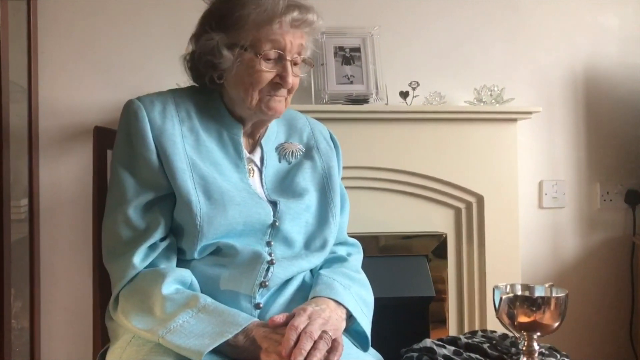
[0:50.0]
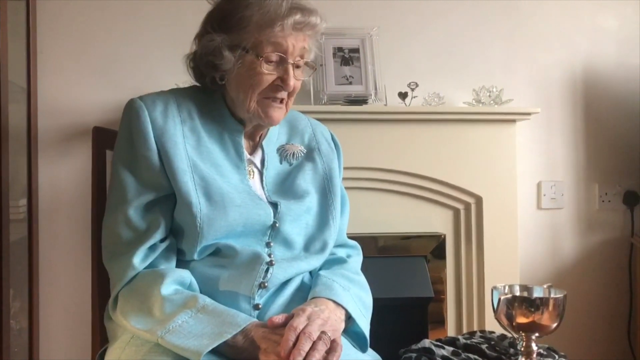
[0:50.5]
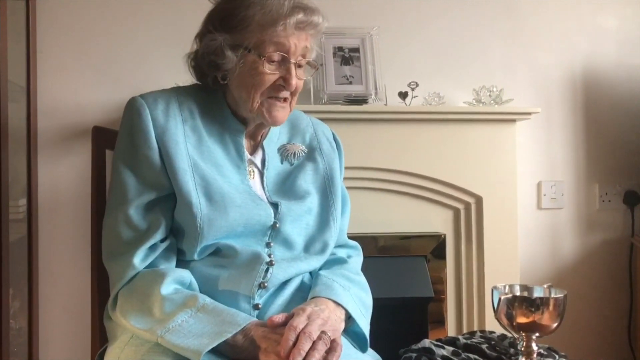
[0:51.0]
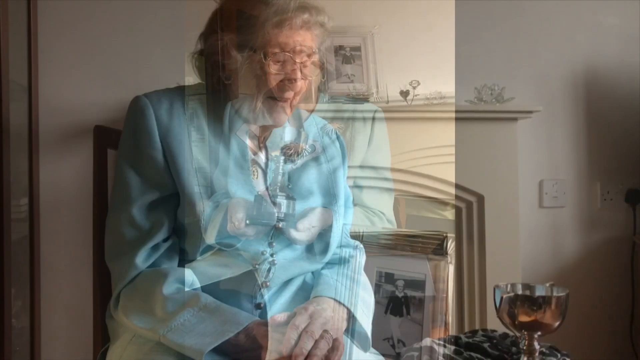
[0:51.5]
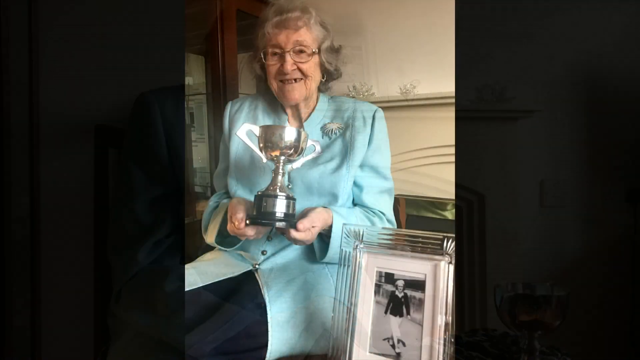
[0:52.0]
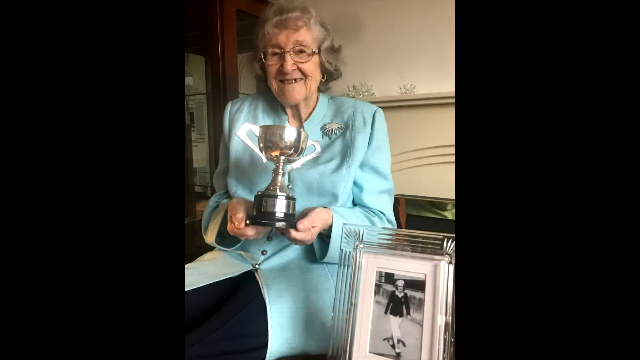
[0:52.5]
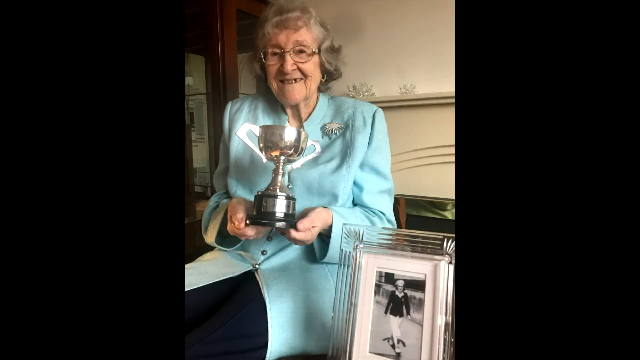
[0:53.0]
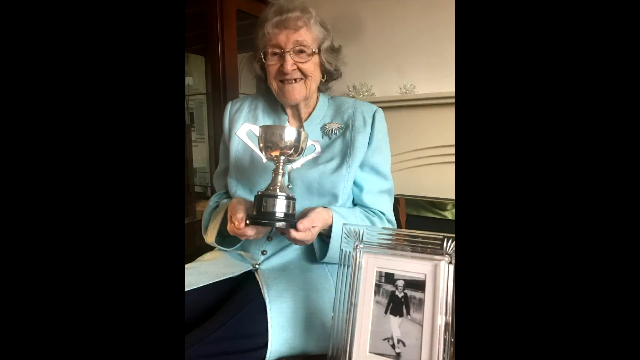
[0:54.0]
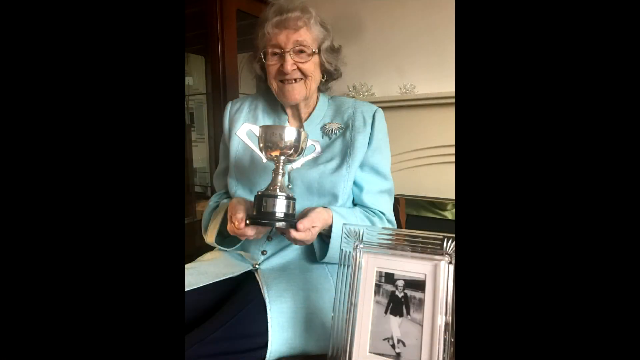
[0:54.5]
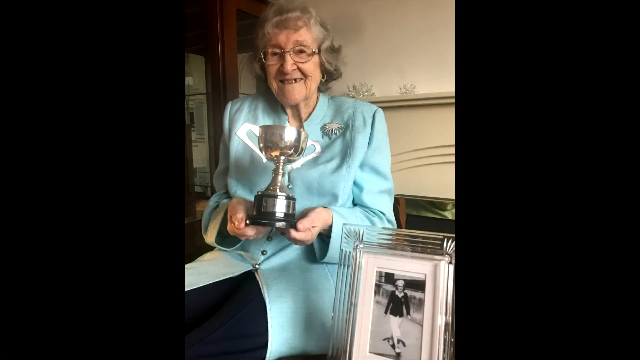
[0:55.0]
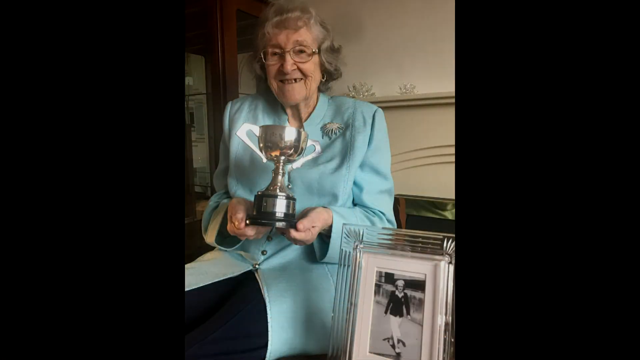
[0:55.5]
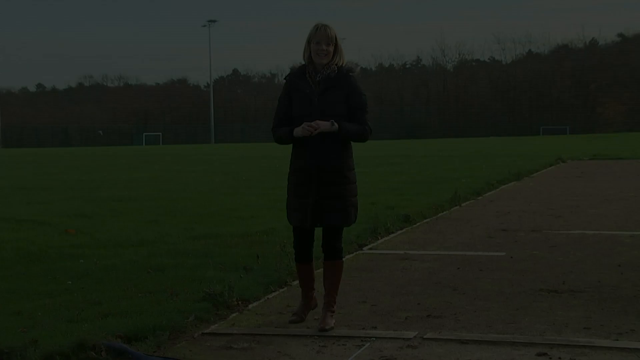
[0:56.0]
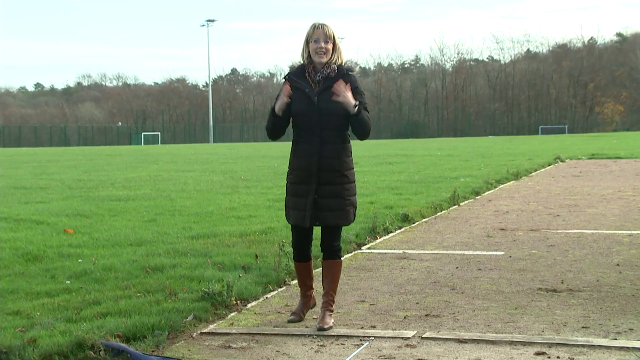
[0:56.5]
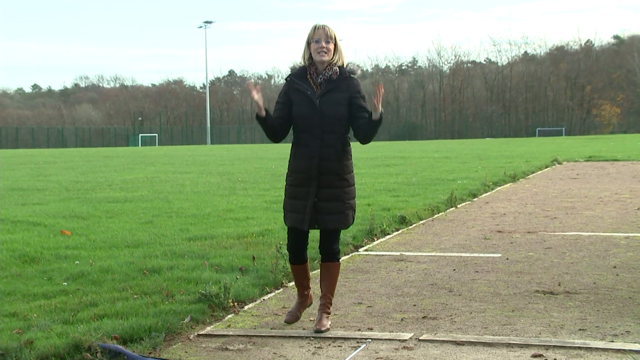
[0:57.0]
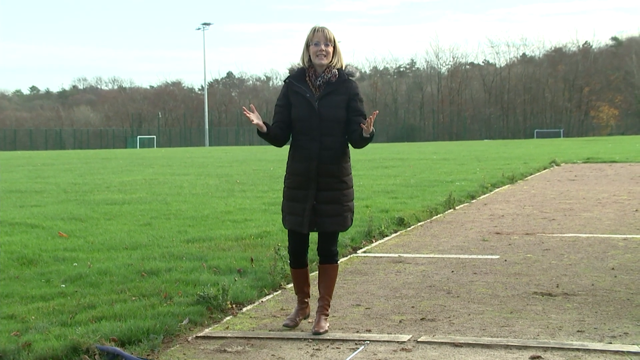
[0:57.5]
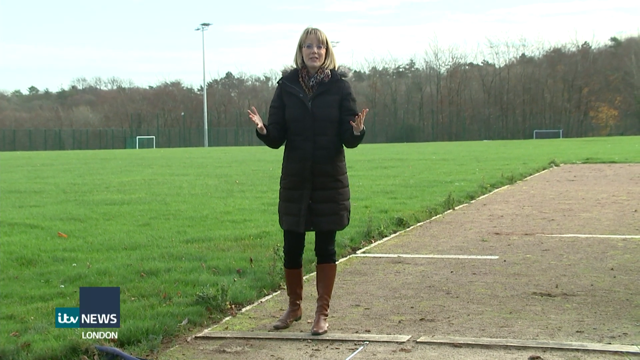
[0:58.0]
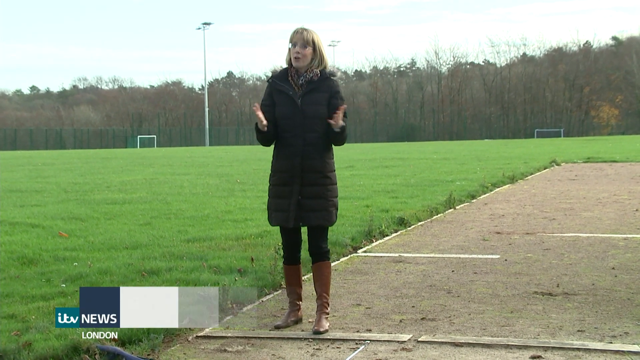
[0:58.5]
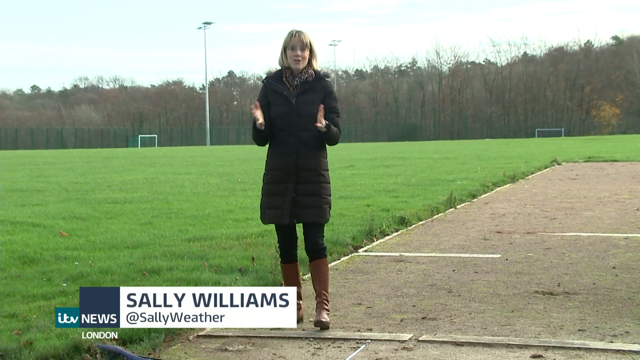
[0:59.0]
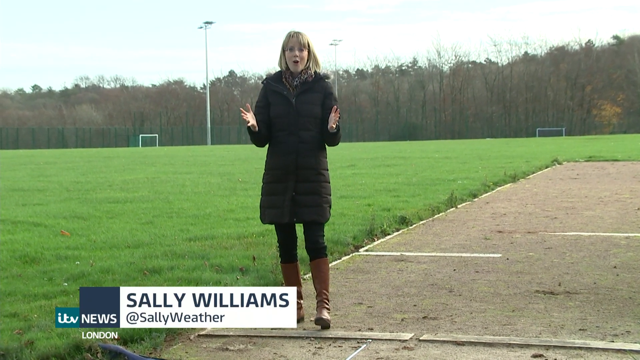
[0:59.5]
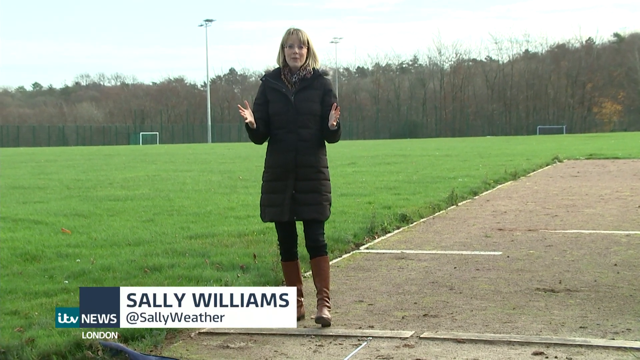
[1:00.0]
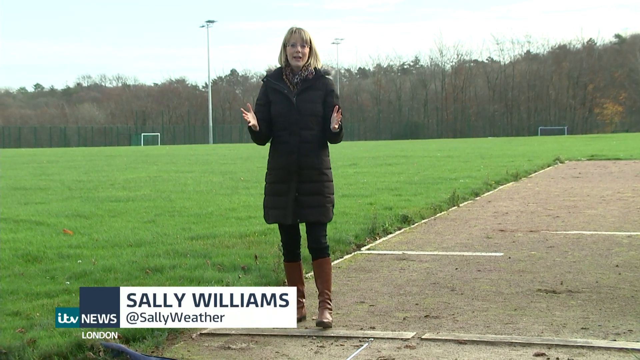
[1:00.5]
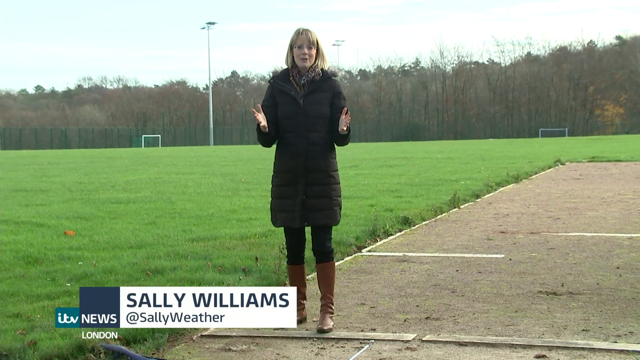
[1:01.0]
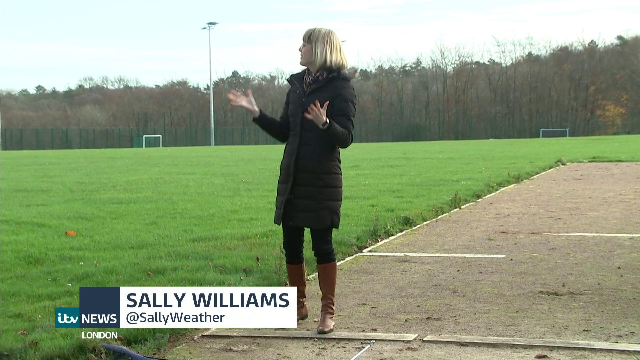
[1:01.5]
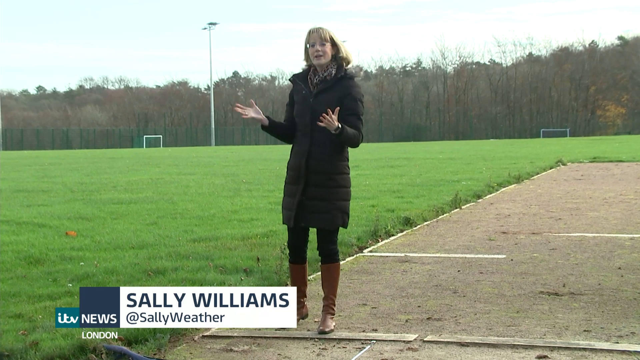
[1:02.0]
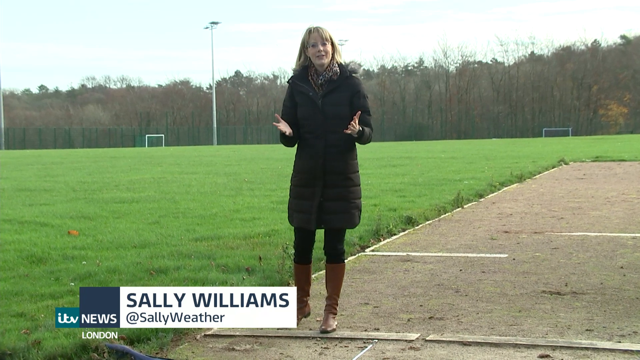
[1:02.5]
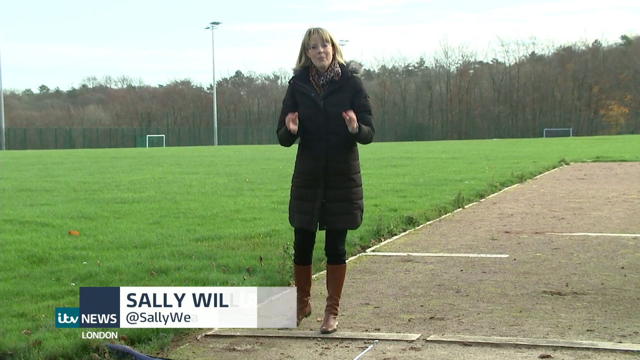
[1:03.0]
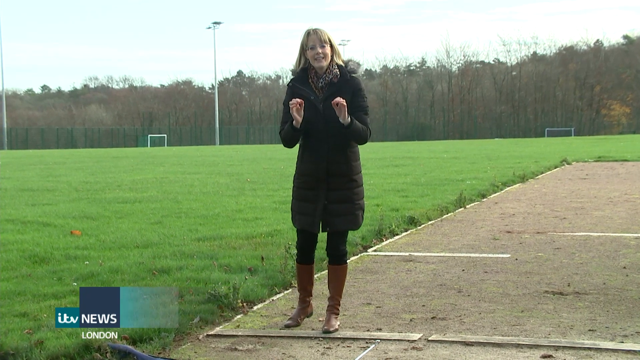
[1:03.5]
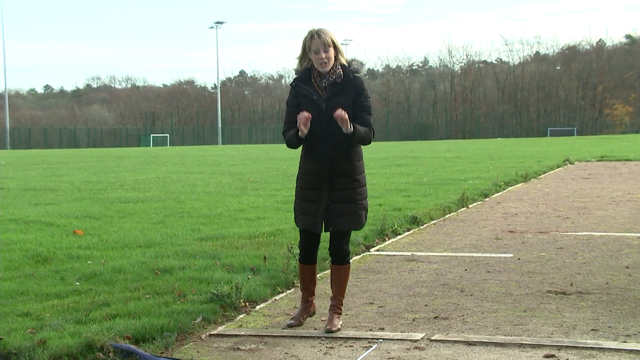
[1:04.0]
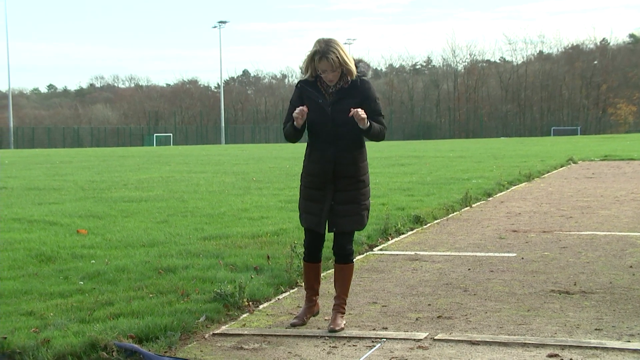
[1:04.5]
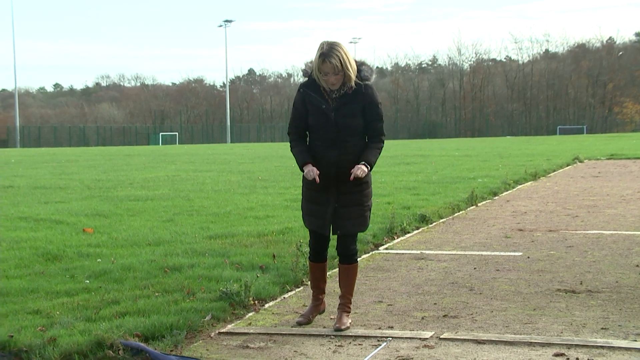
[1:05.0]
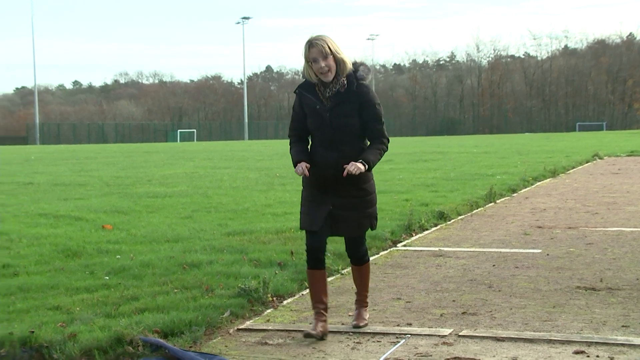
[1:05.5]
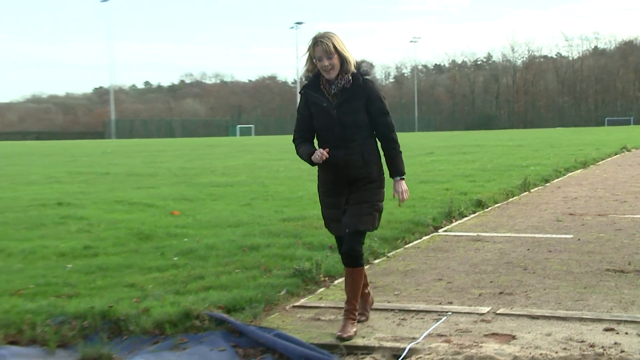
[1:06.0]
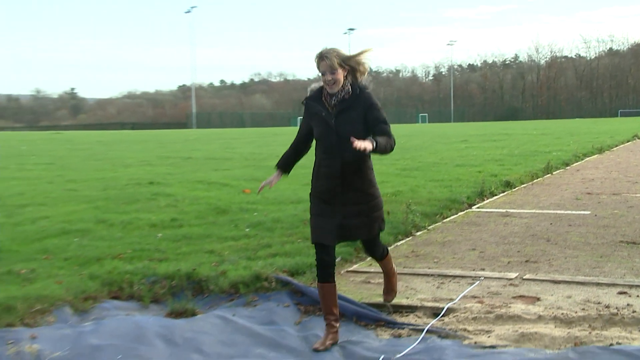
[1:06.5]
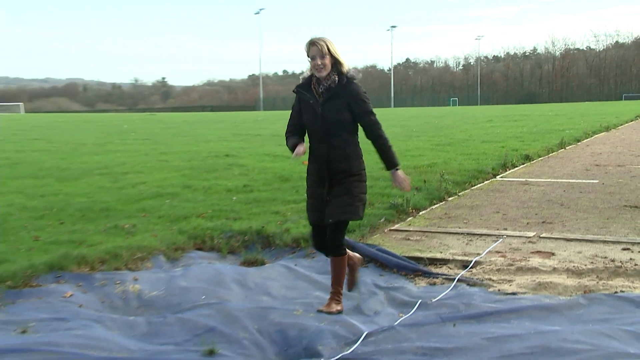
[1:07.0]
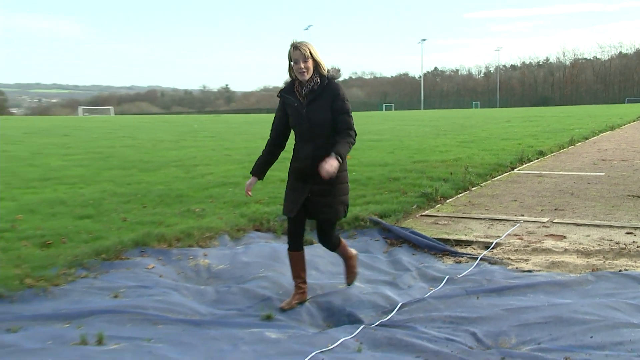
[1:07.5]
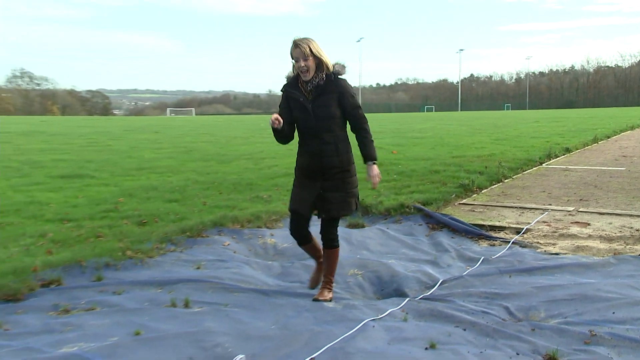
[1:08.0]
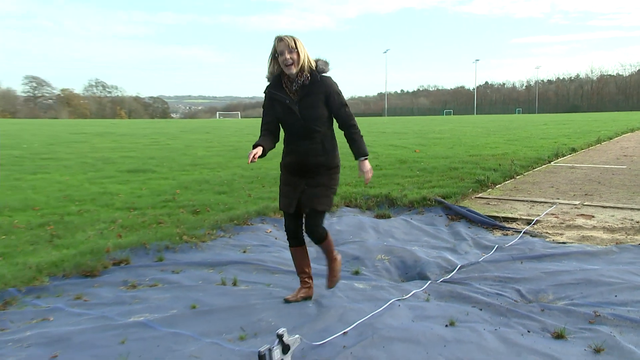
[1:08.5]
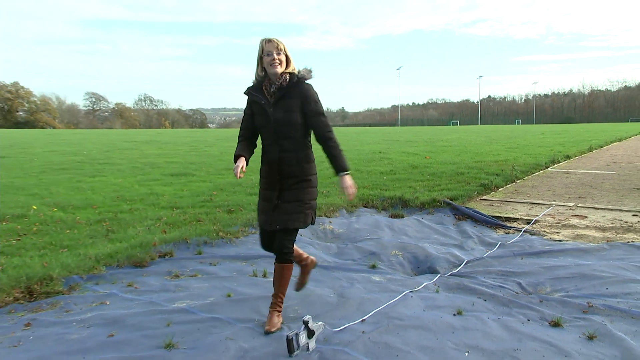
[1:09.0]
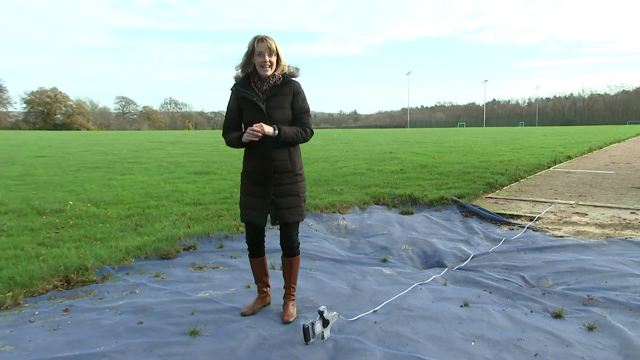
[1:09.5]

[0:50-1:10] An older woman in a light blue suit, glasses and earrings, who looks maybe in her 80s or 90s, looks at a silver cup that appears to be a trophy. She is apparently sitting in her house. A still picture shows her holding a silver trophy up. Then a woman reporter named Sally Williams appears, wearing a long jacket, pants, brown boots and glasses, with a short haircut. Behind her is a big field, like a soccer field, with a lot of trees in the background; it is daytime and the sunlight is visible. She walks on some type of blue tarp.